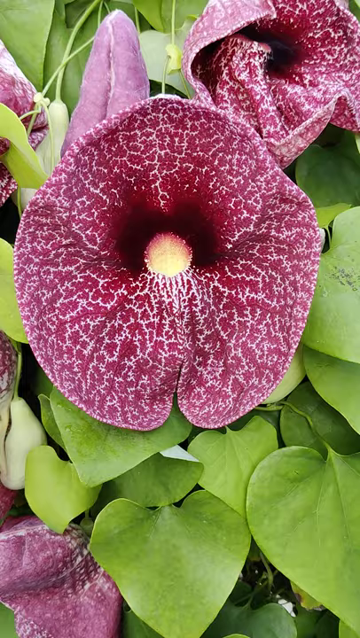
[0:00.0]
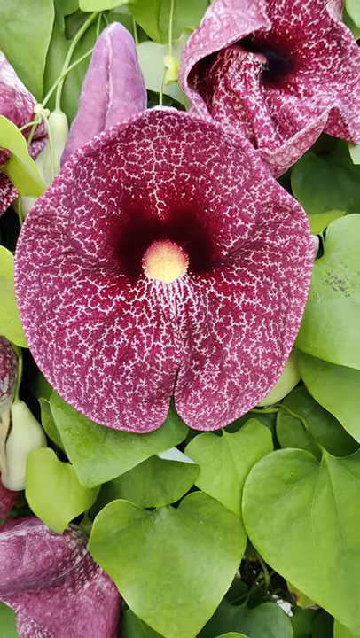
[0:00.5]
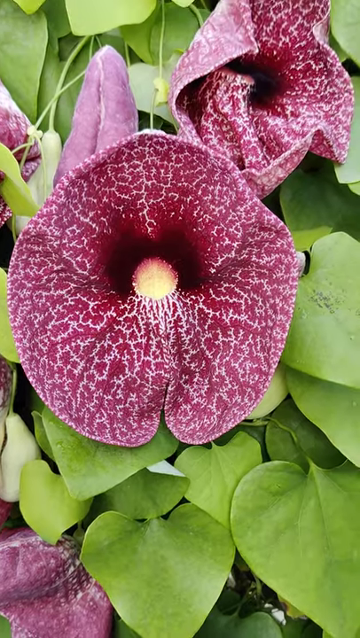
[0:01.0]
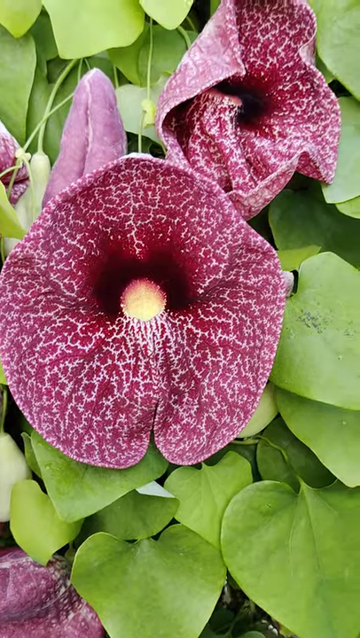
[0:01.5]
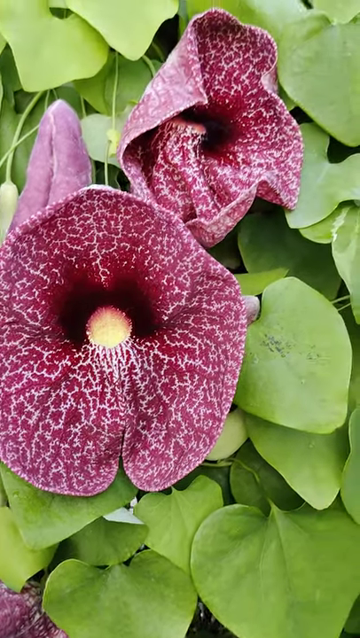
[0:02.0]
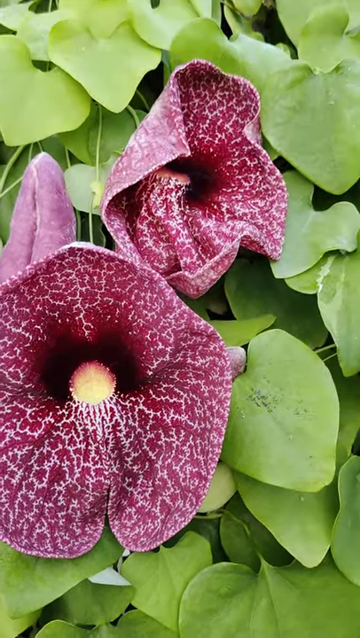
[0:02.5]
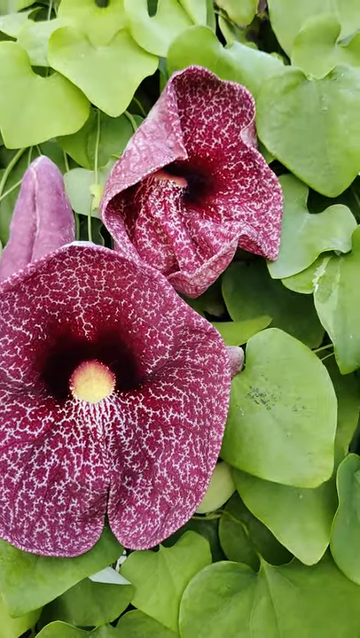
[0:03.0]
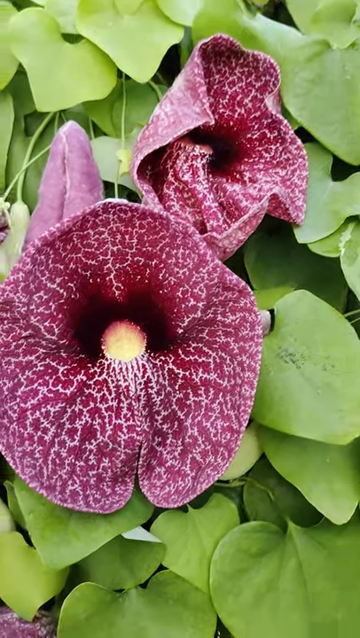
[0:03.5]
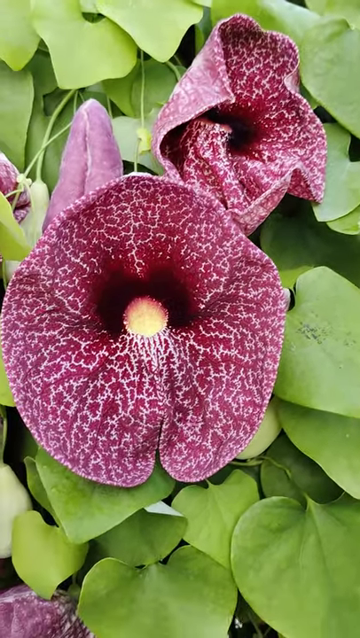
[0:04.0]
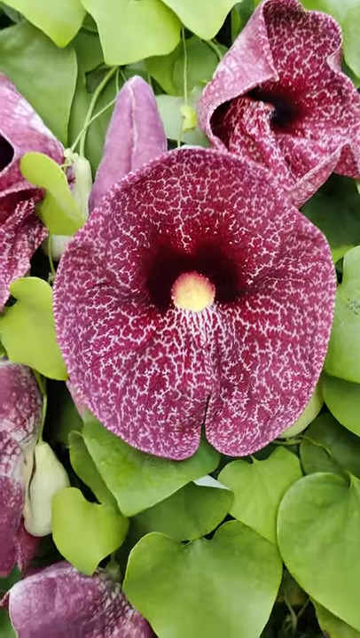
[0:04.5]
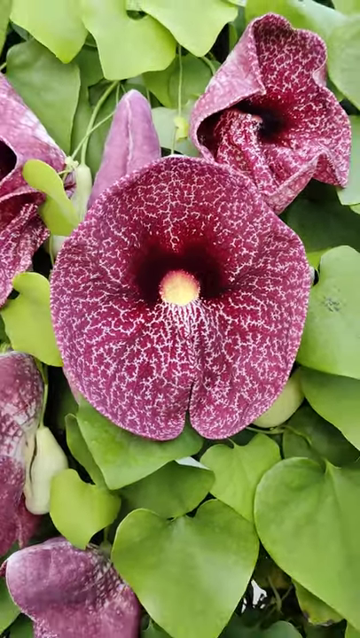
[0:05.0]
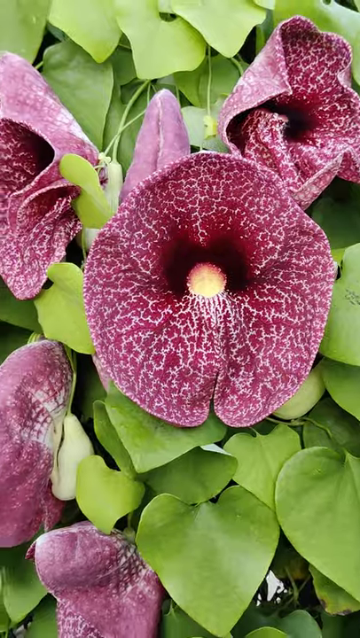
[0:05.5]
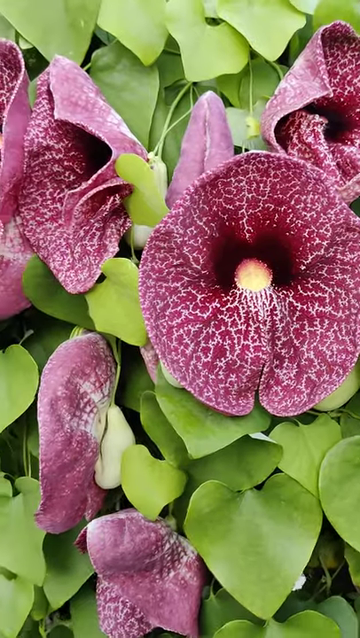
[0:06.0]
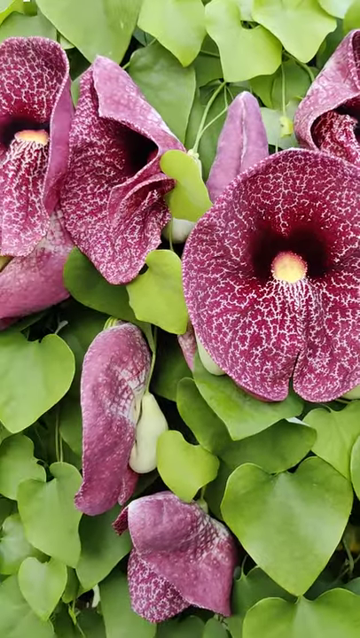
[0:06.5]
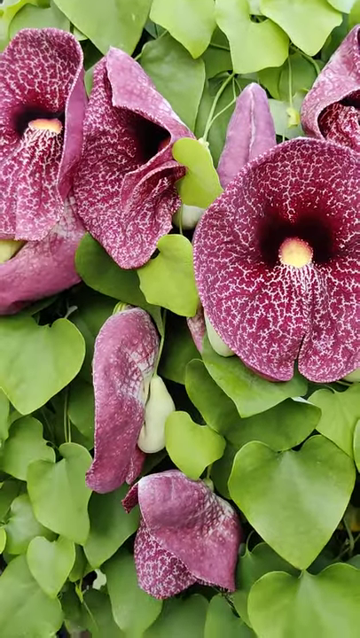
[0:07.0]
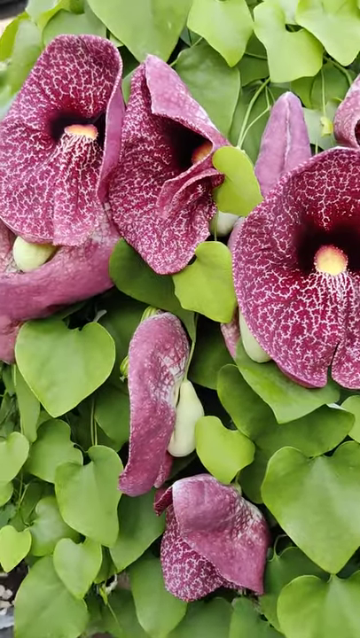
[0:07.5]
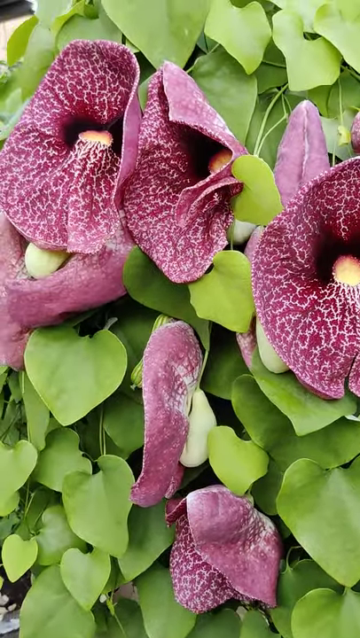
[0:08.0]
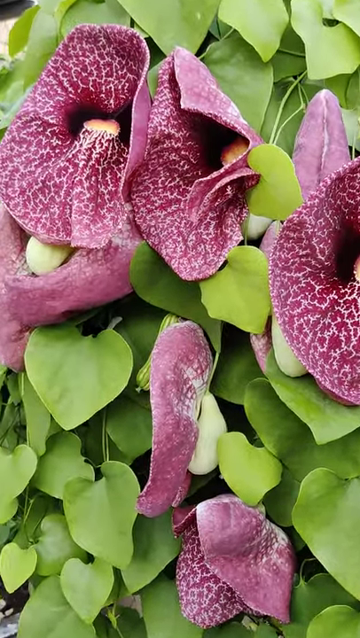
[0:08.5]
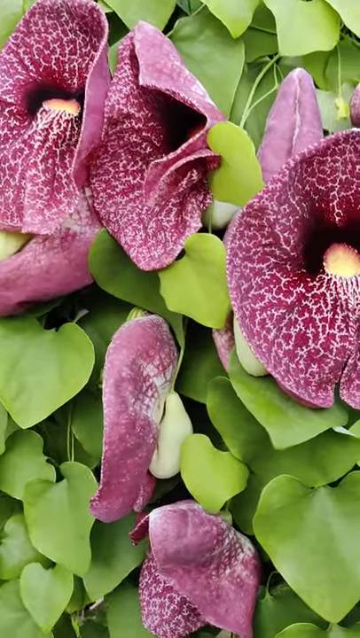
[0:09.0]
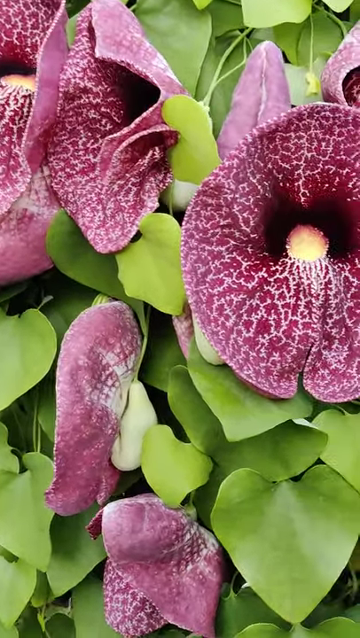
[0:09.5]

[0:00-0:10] A flower-like thing of a red, rosy color has green leaves around it, and its center is kind of a yellowish color. Others like it are attached to the plant-like thing. On the middle of the left side of the screen is something that almost looks like a pear, kind of a white, reddish, onion color. The large flower-like thing is reddish with white in it and almost looks like an organ from the human body; half of it looks almost like a kidney.